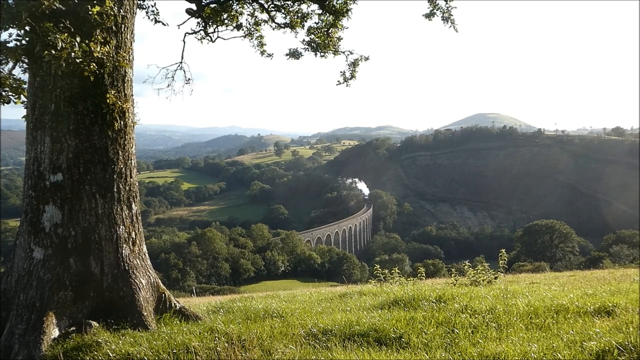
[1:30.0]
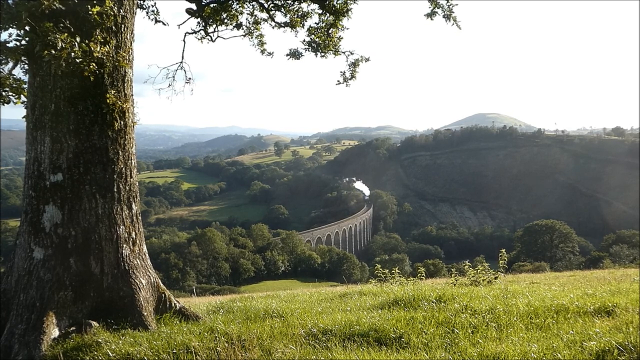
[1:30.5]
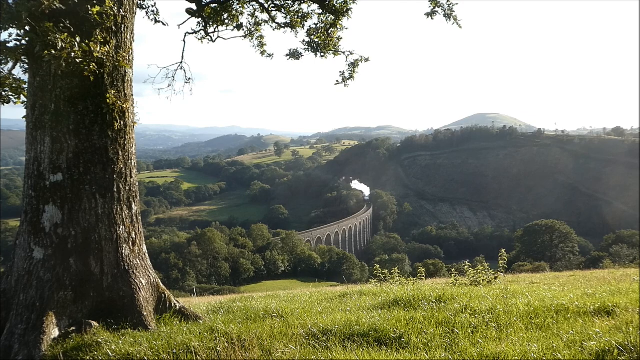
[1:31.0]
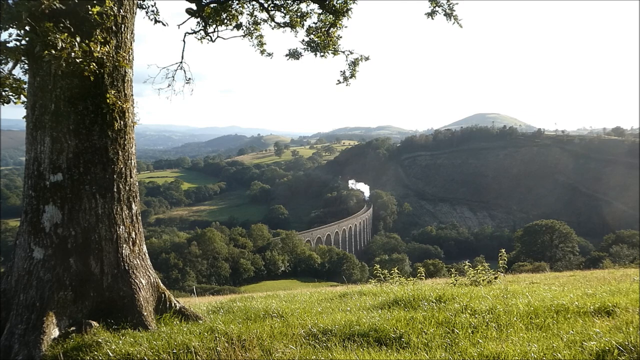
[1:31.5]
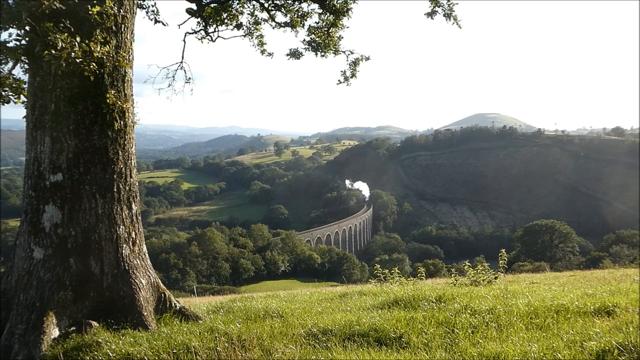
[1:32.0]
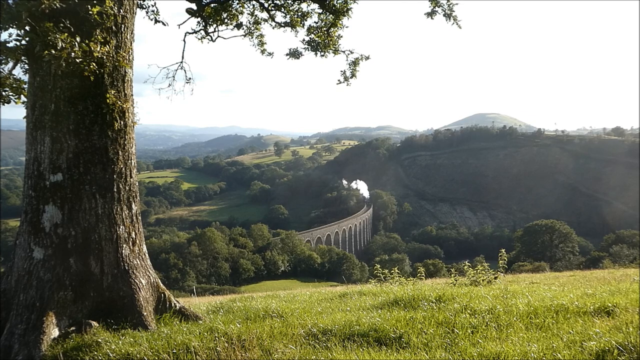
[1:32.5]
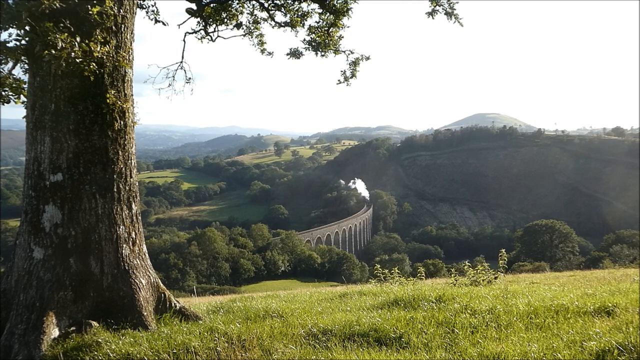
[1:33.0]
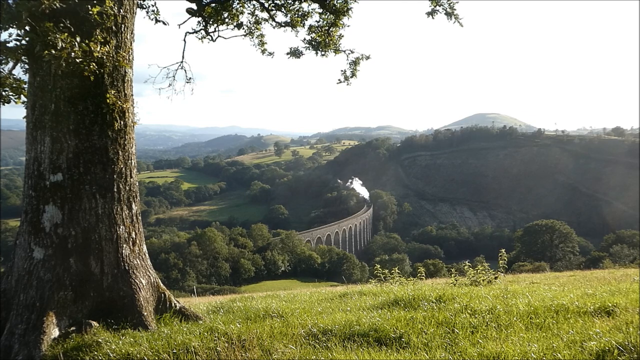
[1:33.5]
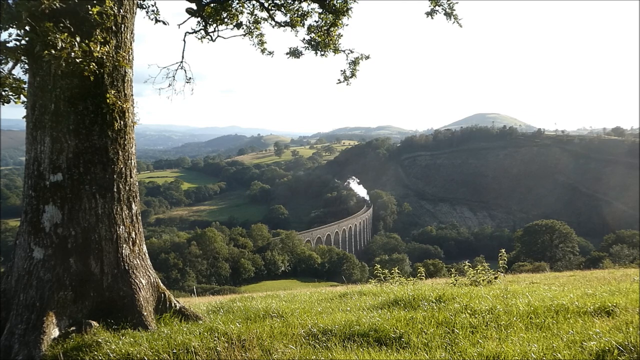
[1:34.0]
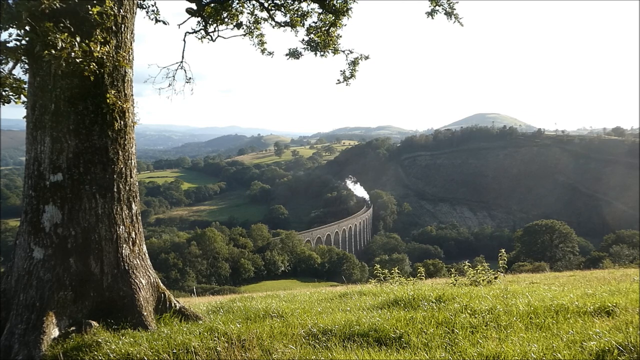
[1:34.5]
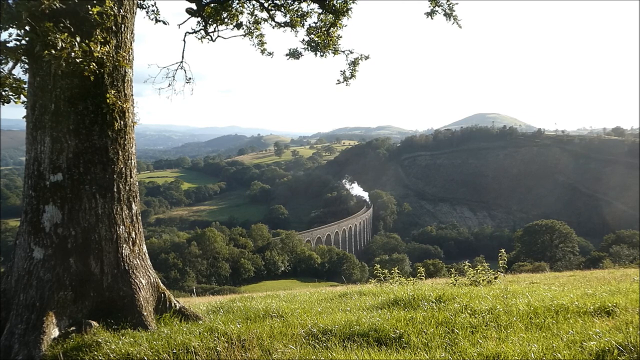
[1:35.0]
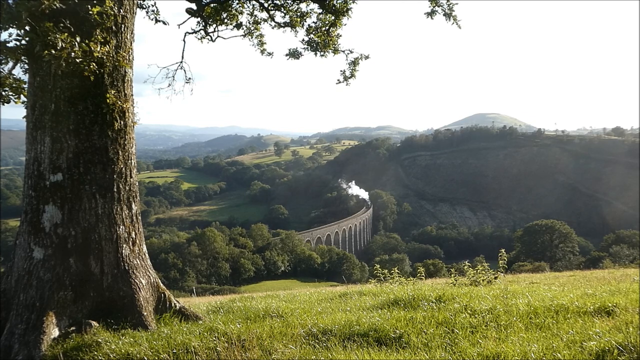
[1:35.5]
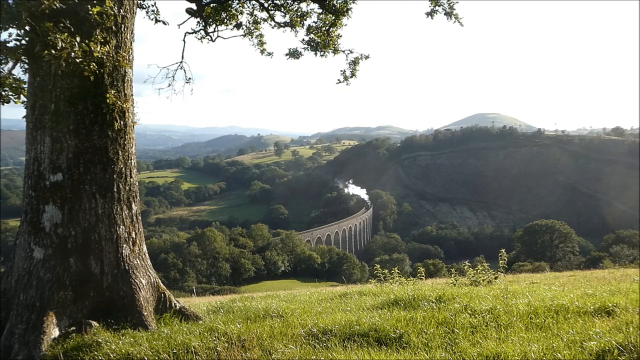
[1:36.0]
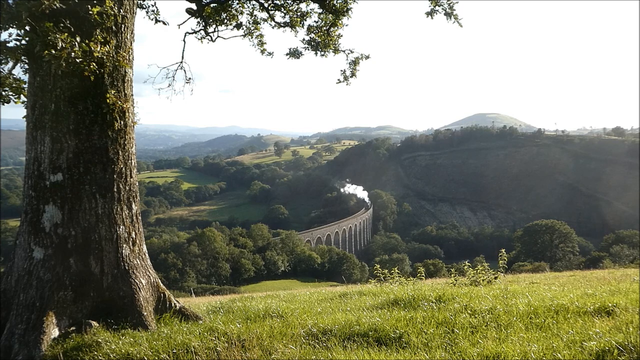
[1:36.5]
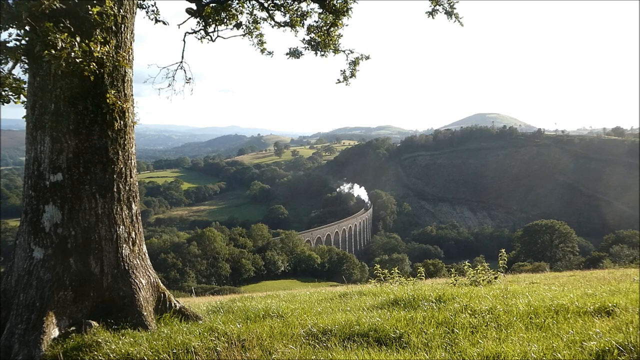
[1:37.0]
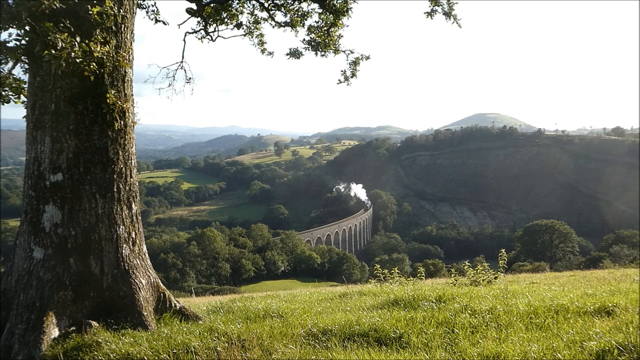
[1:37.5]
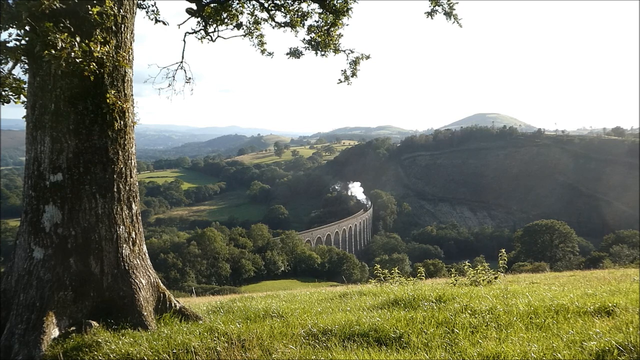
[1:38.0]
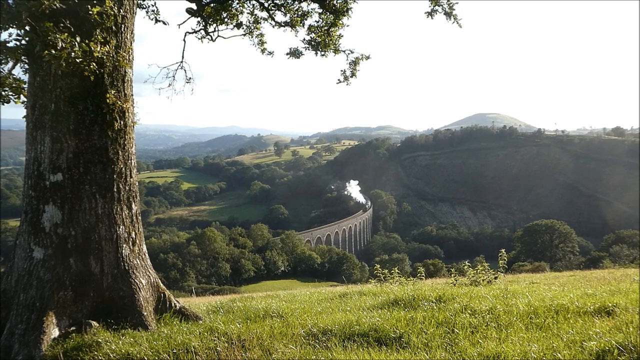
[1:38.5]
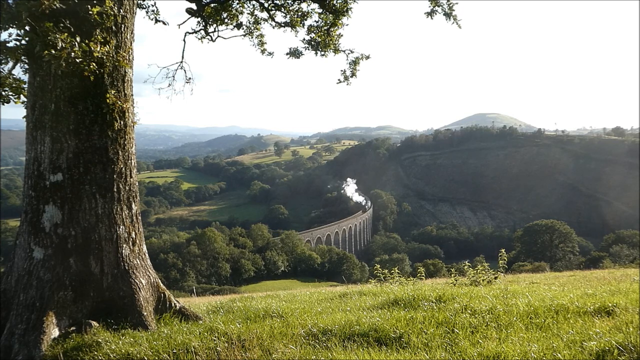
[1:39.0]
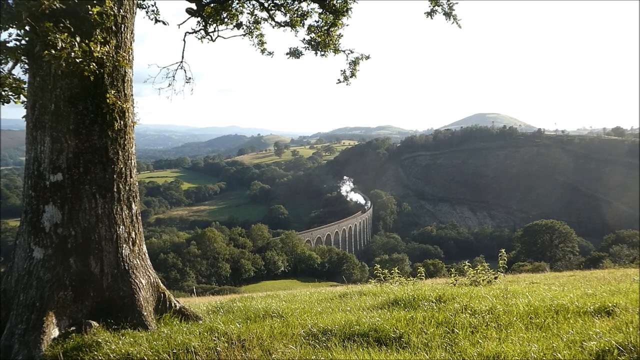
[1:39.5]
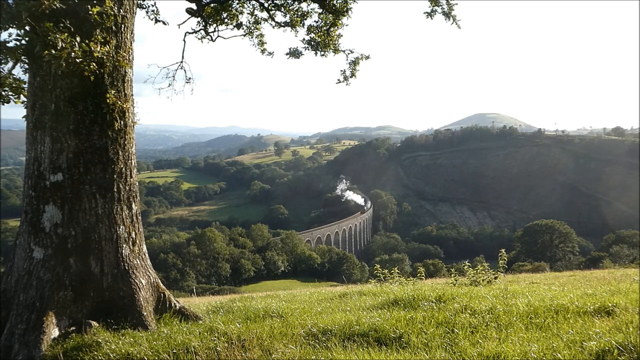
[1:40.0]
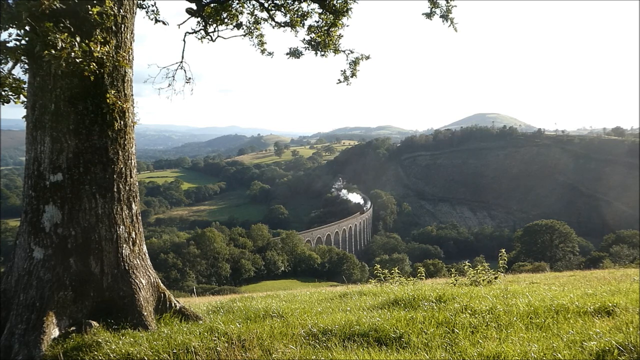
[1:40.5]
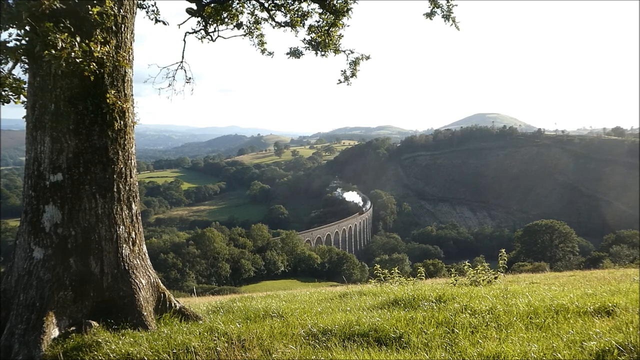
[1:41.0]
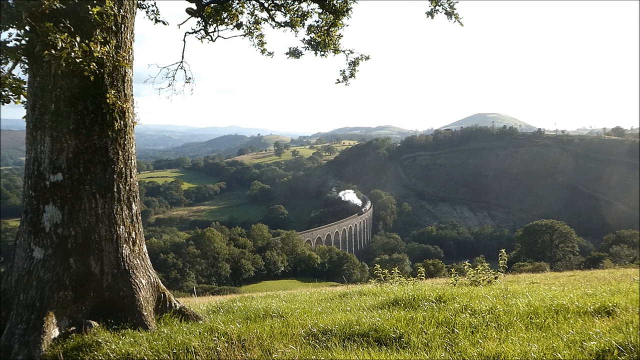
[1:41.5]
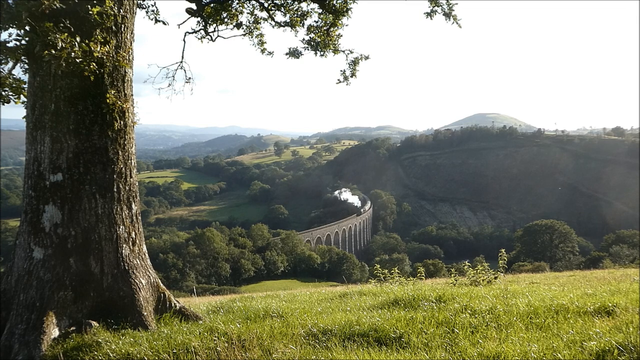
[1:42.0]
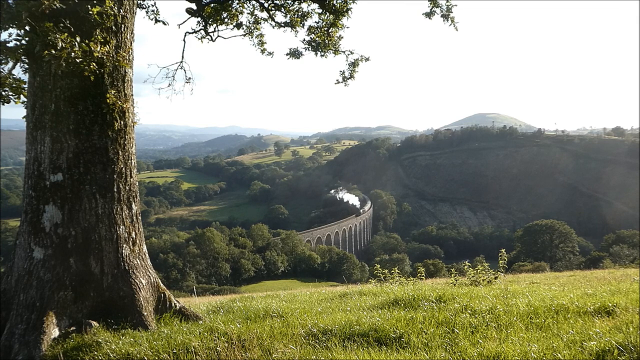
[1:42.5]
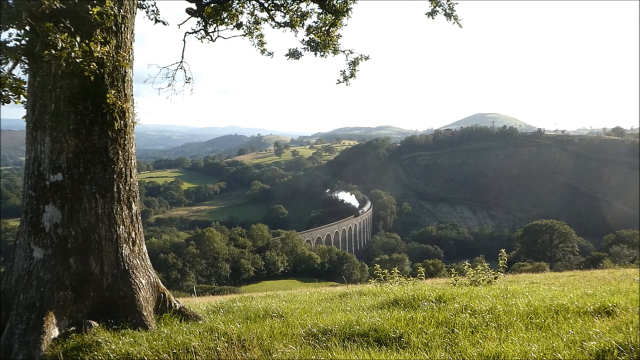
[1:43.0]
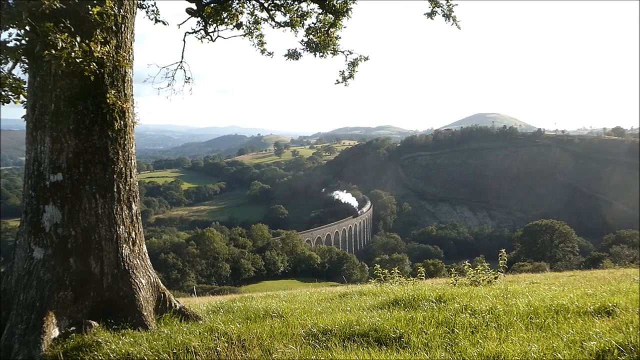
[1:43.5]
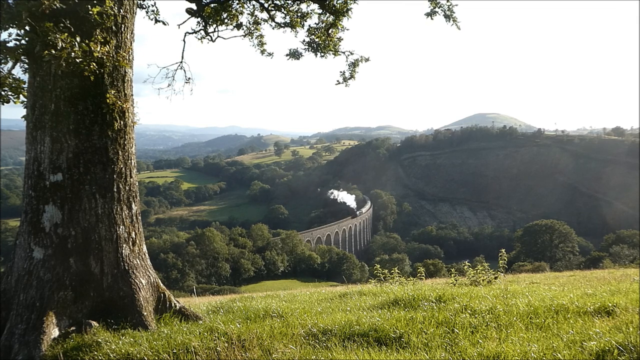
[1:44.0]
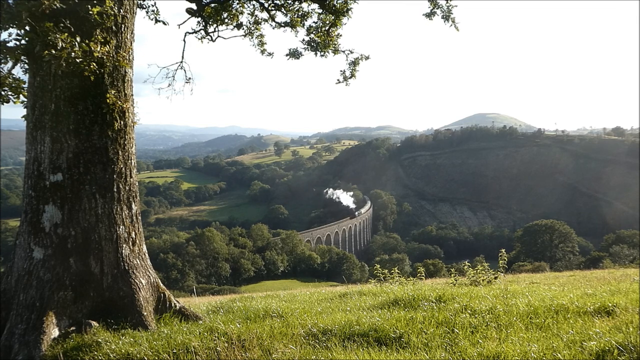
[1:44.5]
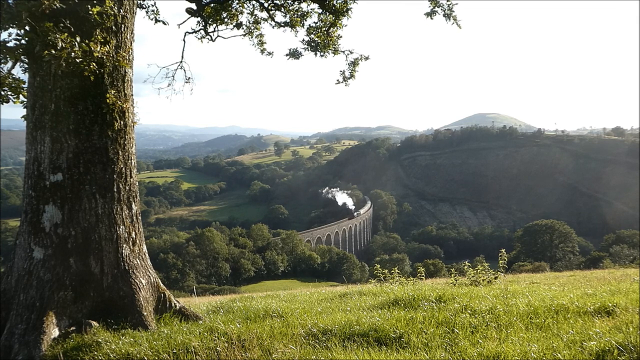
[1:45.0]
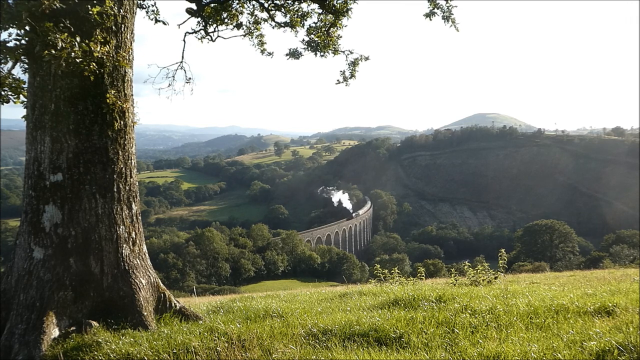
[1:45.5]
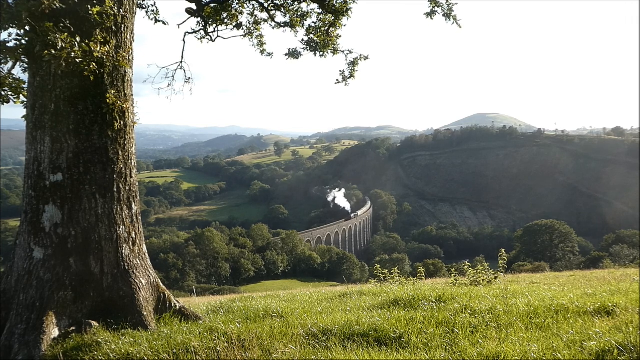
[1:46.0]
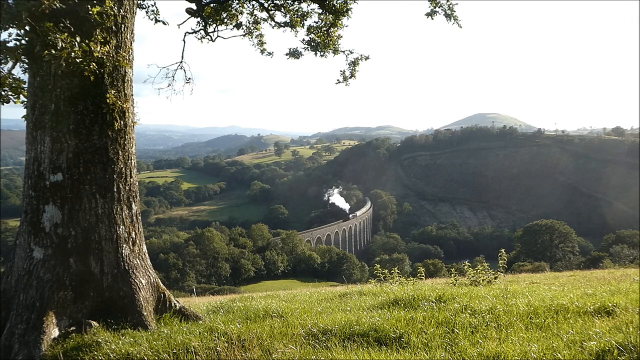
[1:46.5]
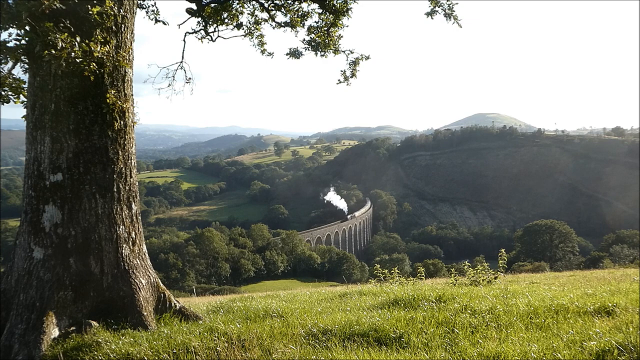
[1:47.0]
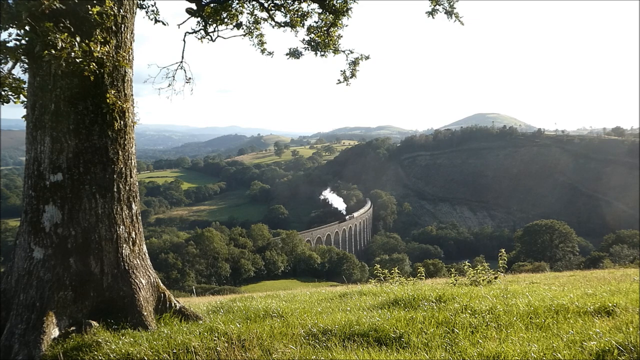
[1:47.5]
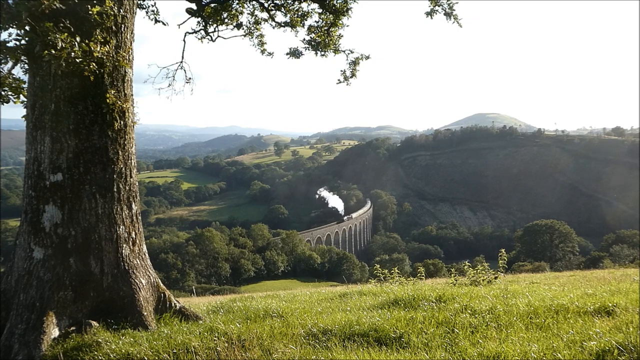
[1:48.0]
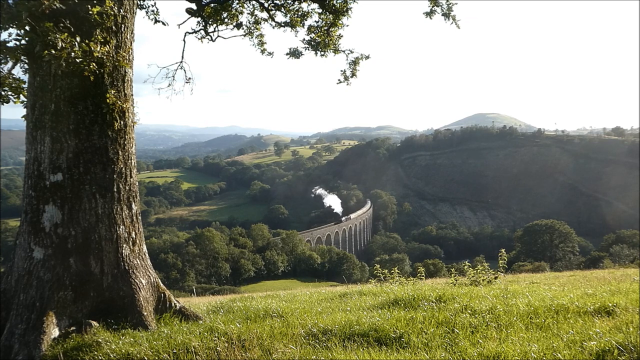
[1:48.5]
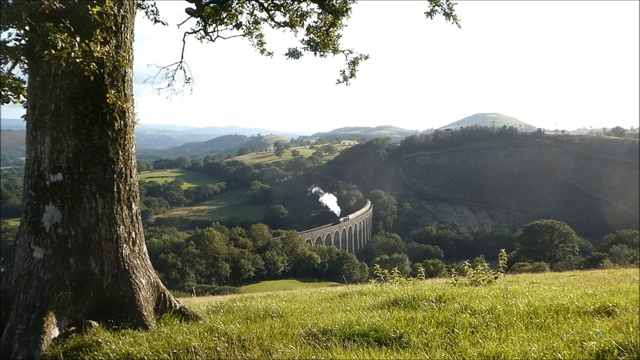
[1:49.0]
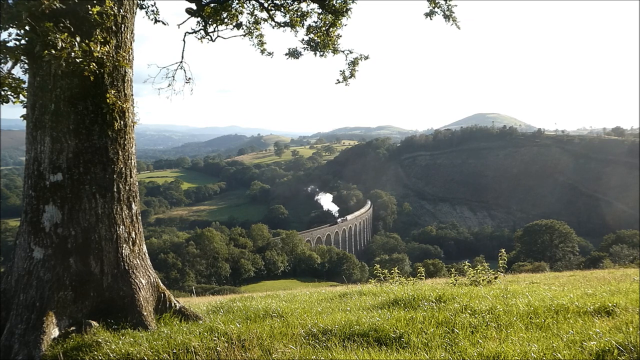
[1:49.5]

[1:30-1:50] The train, still in the center, finally makes its way onto the visible part of the bridge; the rest of the bridge is covered by a bunch of trees and greenery toward the back center. The front of the train comes onto the bridge, and then its body becomes visible as well. The train takes up about 70% of the visible bridge. The bridge is apparently made of concrete or some type of stone, and there are arches all along the bottom, about 10 to 12 of them. The smoke in this scene is completely white, with no gray visible.